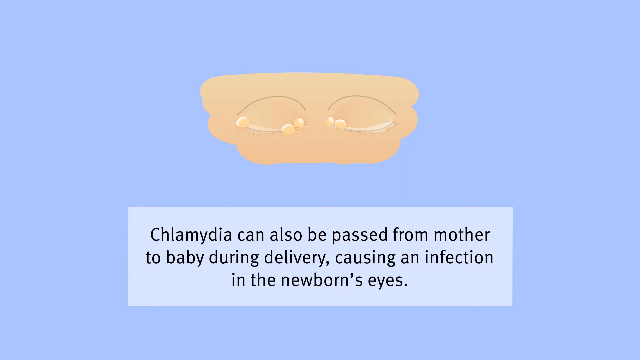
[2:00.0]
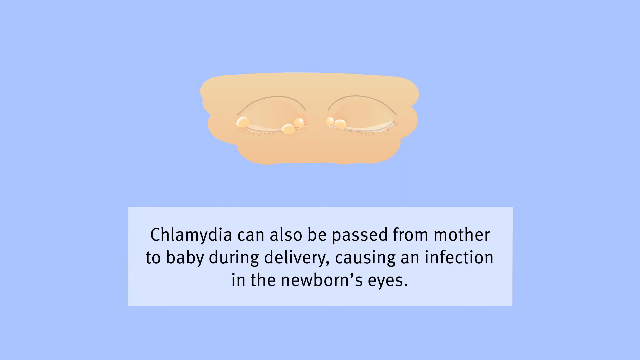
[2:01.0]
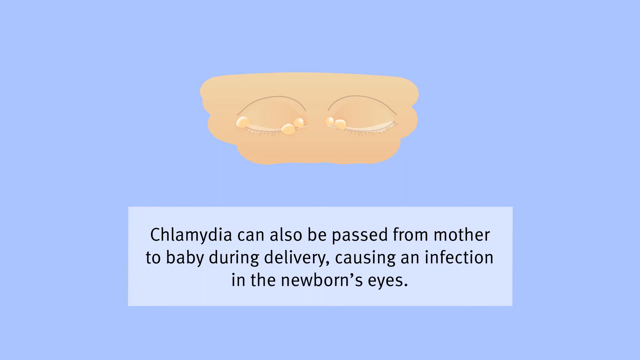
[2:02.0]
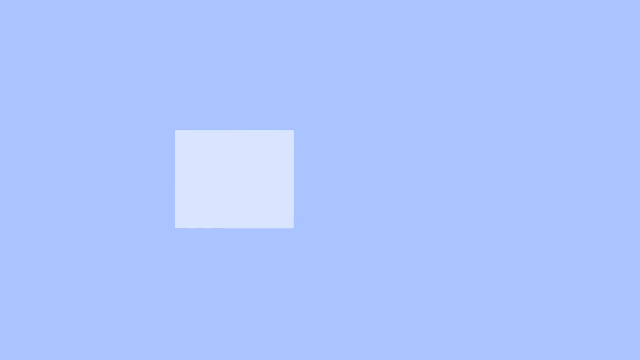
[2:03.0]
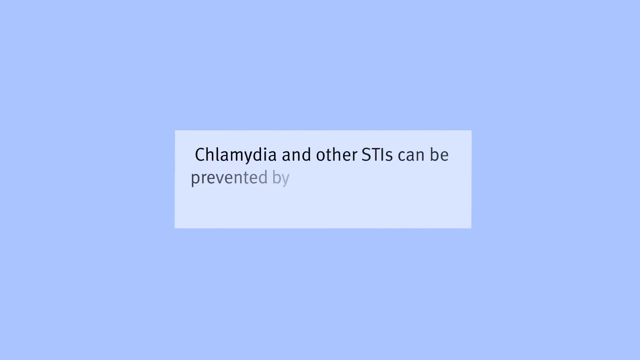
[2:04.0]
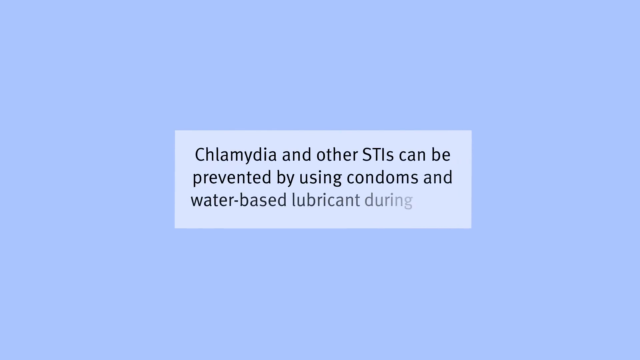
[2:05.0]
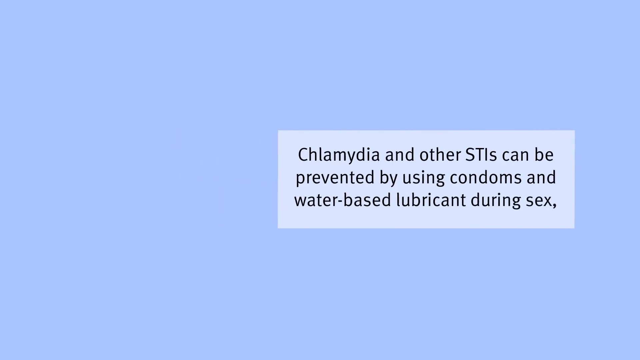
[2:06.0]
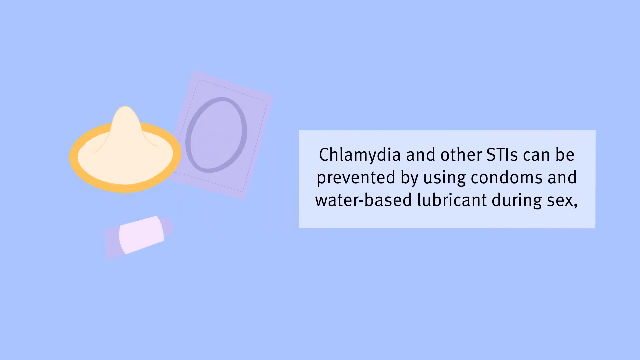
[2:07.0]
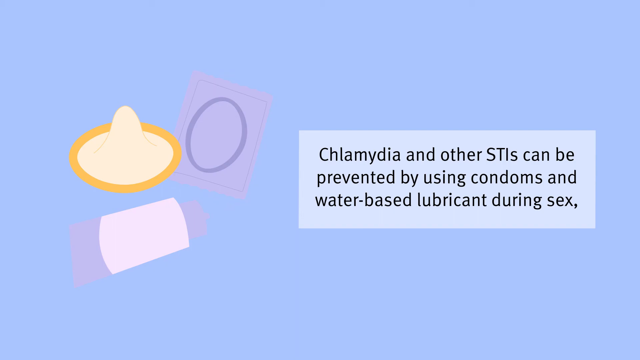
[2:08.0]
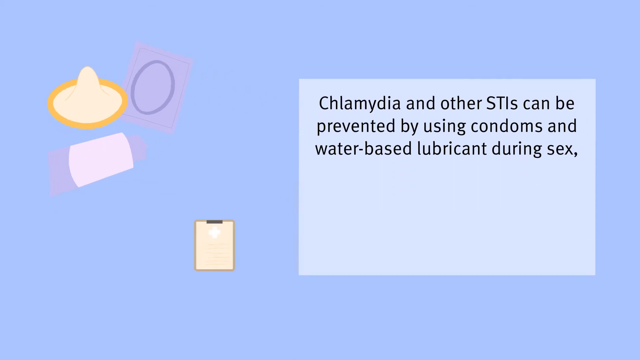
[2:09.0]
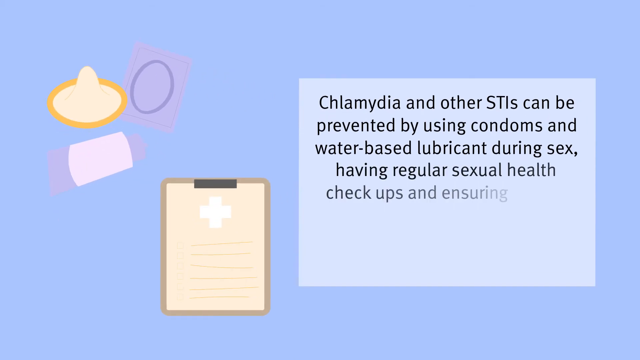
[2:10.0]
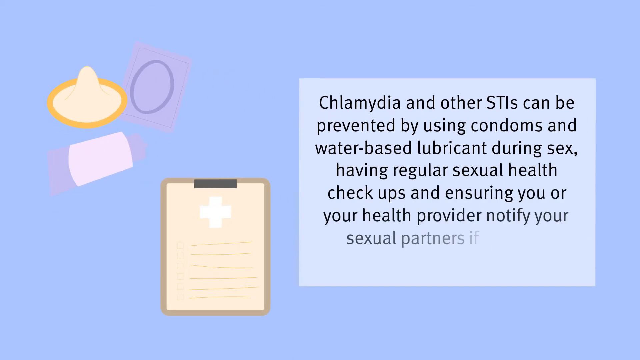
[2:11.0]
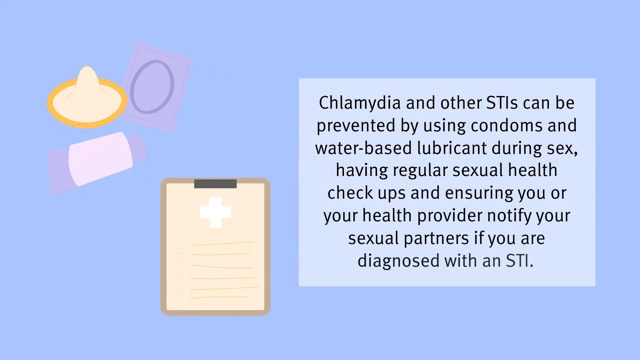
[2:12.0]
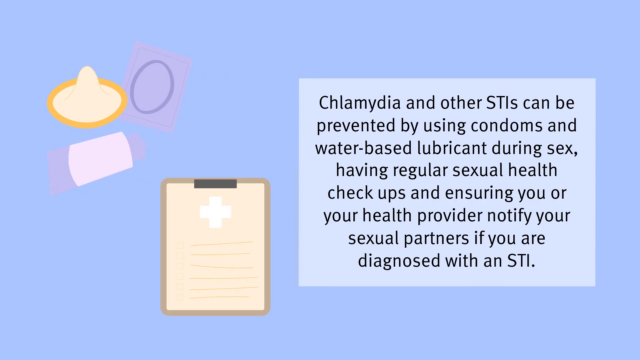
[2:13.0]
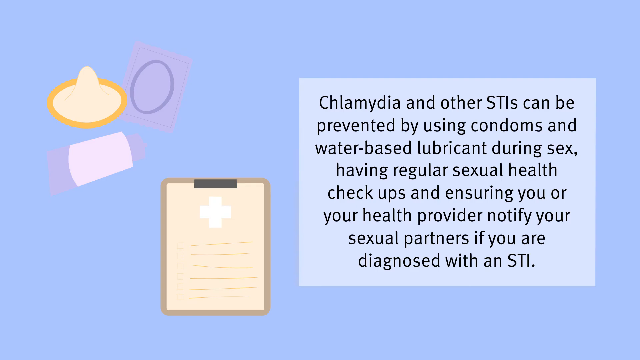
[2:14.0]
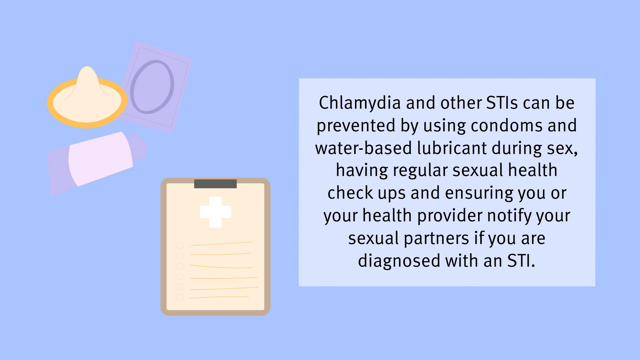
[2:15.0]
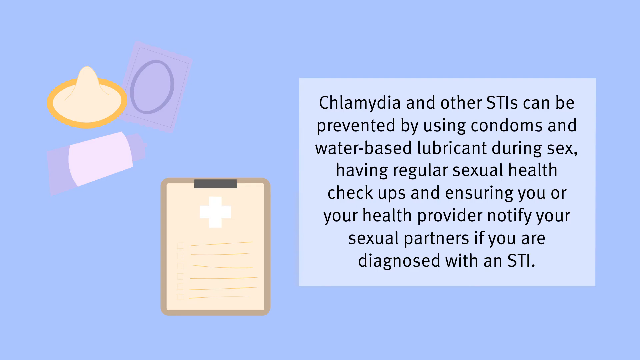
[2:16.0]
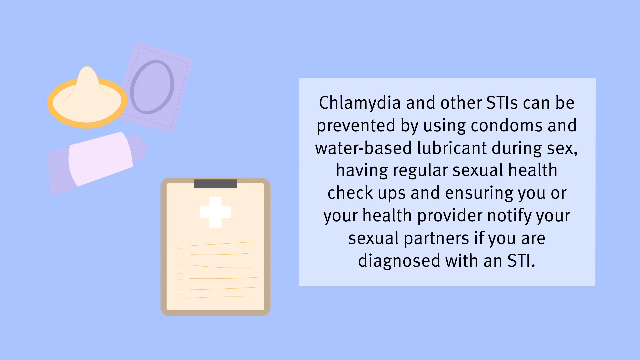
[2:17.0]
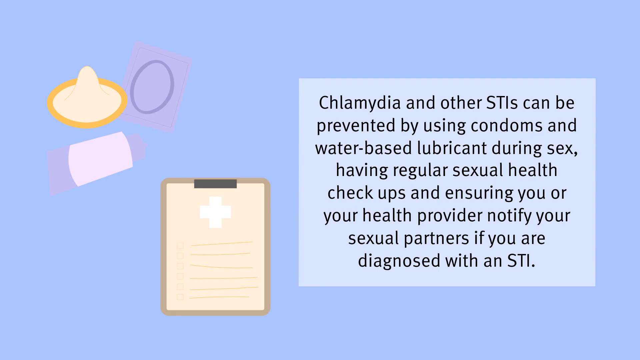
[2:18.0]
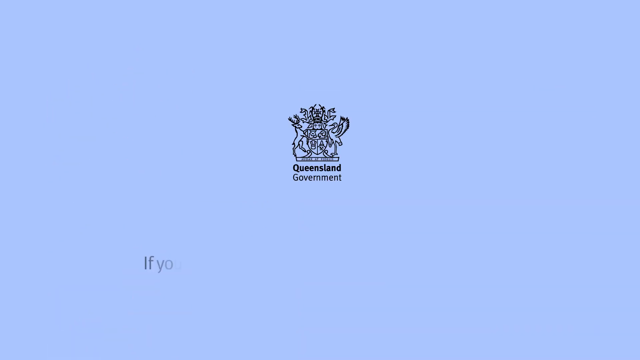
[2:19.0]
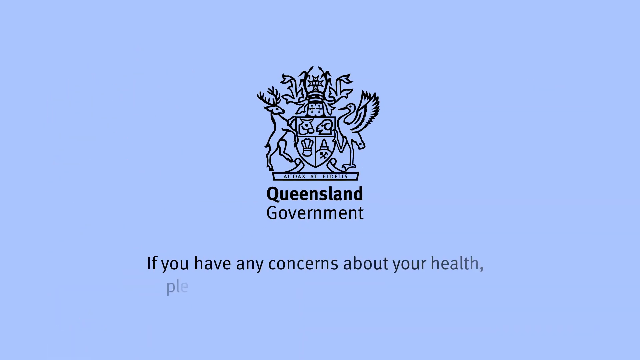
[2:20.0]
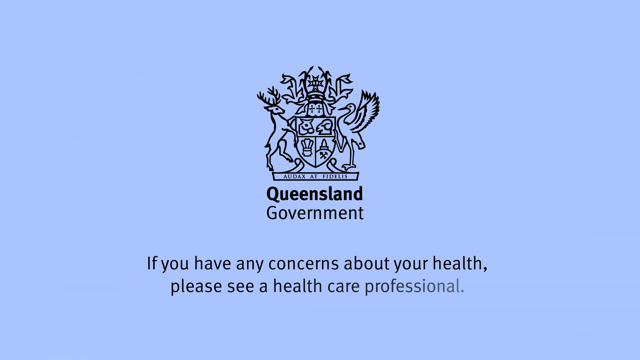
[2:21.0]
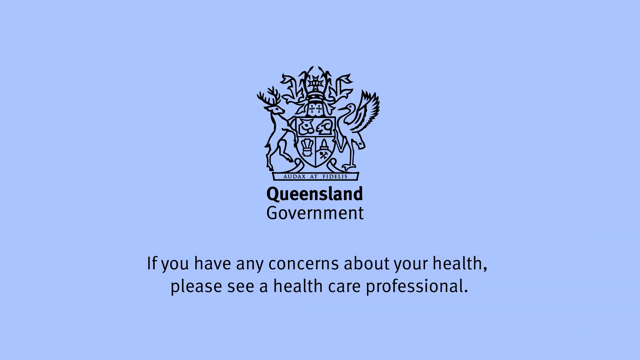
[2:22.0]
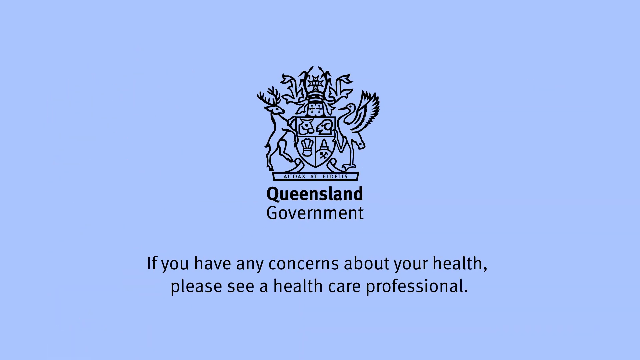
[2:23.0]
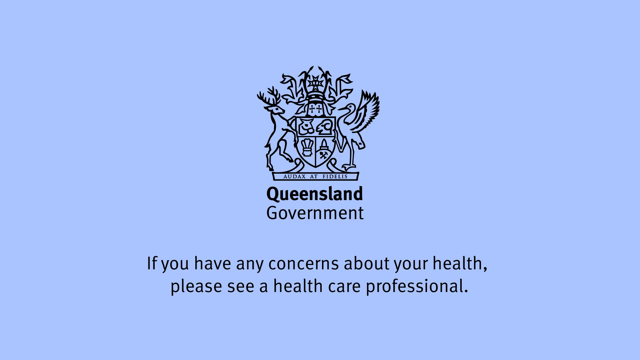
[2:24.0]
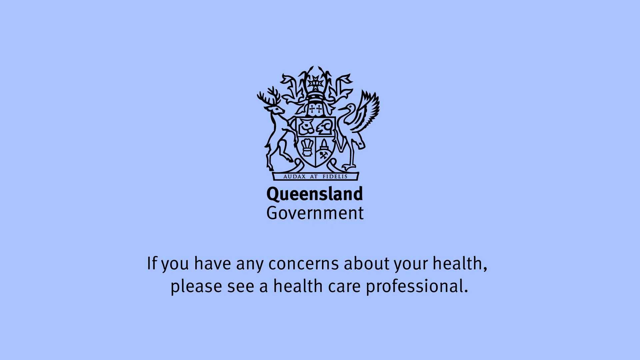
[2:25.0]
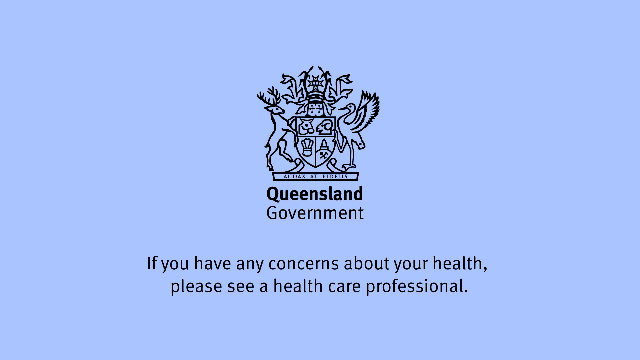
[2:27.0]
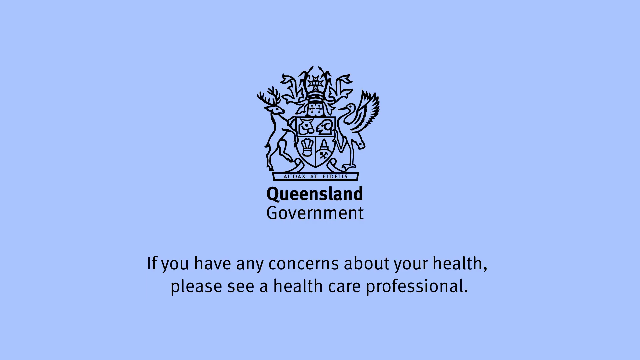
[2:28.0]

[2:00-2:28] The background is blue, kind of robin's egg blue, almost purple, with CGI-type cartoon drawings. Text reads "chlamydia can also be passed from mother to baby during delivery, causing an infection in the newborn's eyes," followed by a close-up of a baby's eyes with the eyelids shut and round things, apparently chlamydia, attached all over the eye, in the middle and at the ends. Then text reads "chlamydia and other STIs can be prevented by using condoms and water-based lubricants during sex," with some pictures. Further text mentions "having regular sexual health checkups" and "ensuring you or your health provider notify your sexual partners if you are diagnosed with an STI."